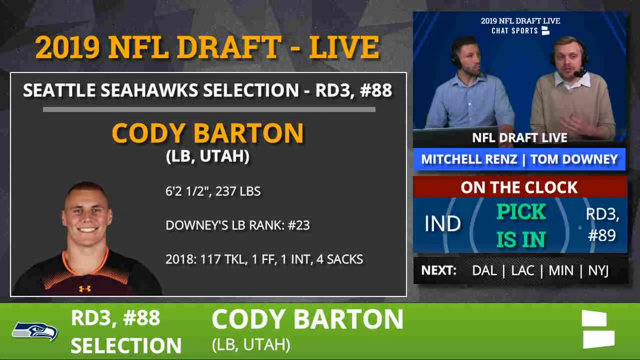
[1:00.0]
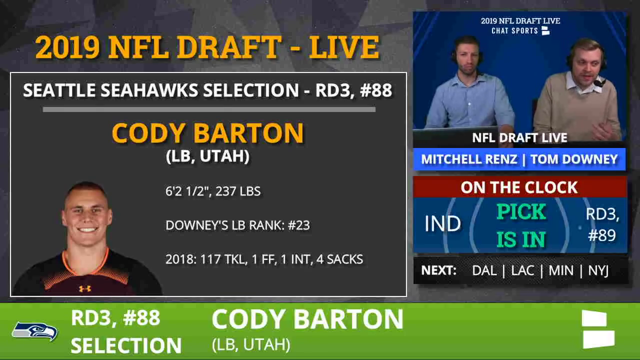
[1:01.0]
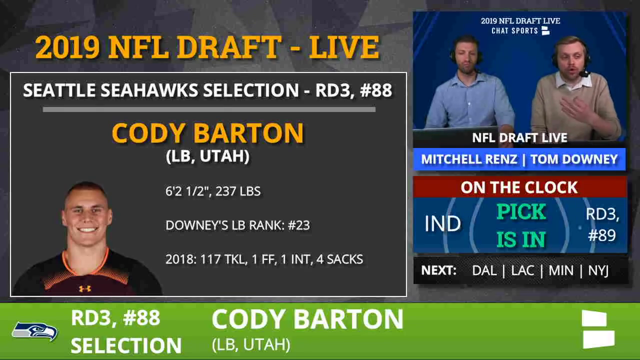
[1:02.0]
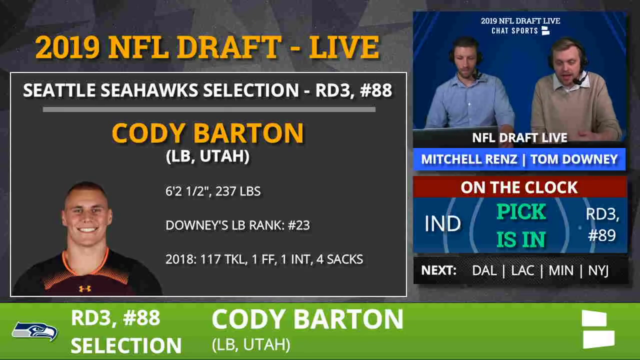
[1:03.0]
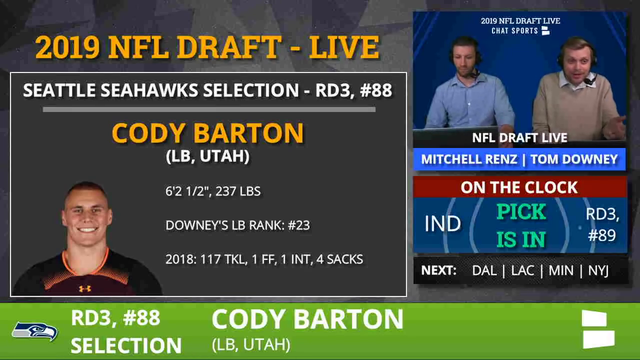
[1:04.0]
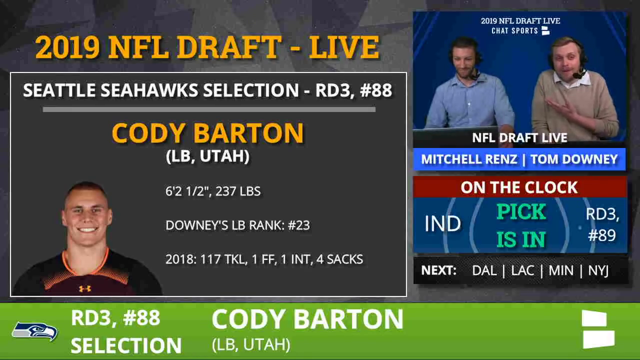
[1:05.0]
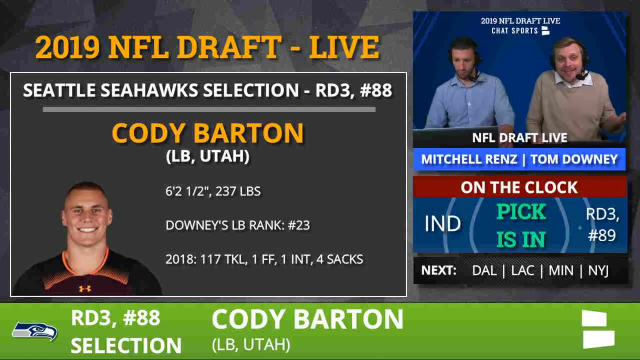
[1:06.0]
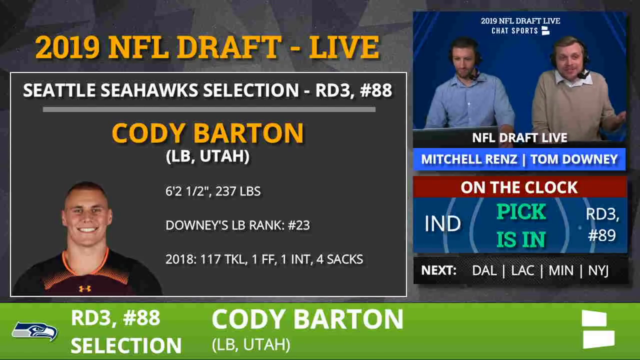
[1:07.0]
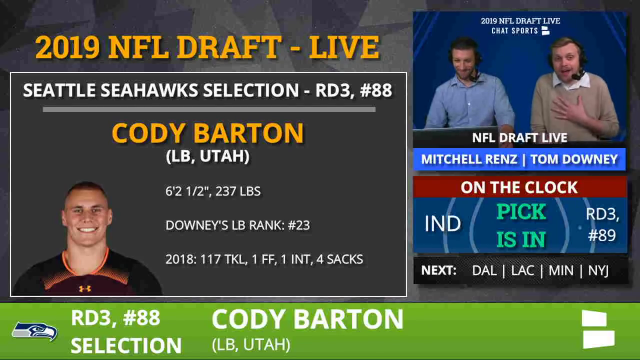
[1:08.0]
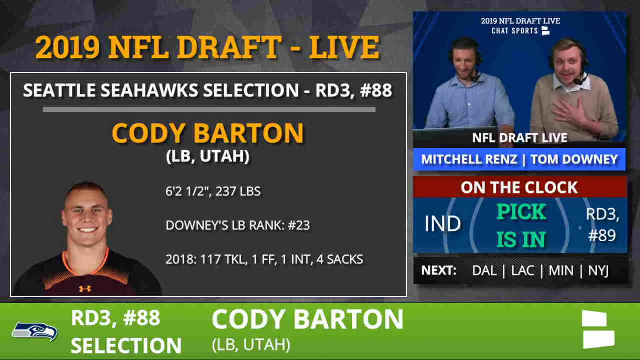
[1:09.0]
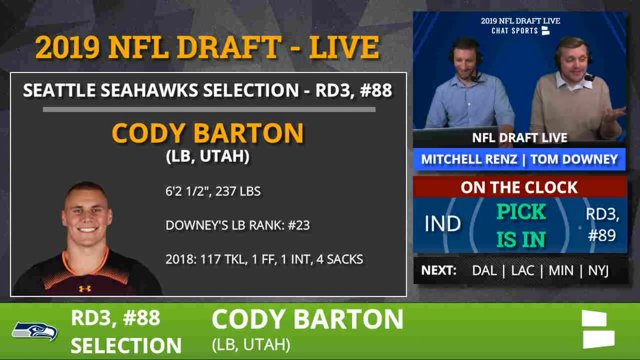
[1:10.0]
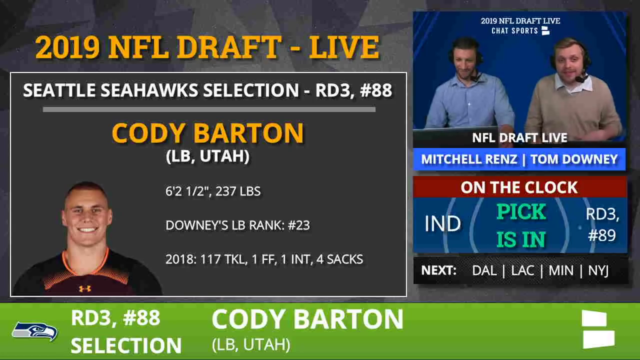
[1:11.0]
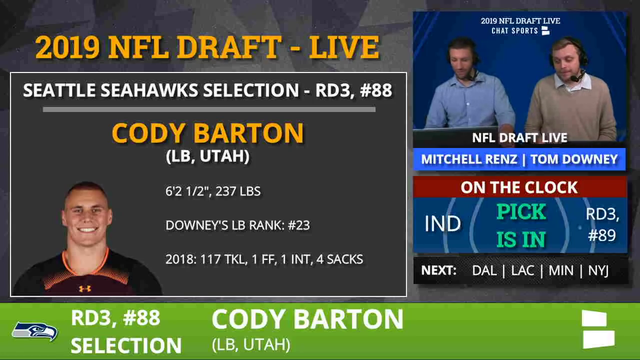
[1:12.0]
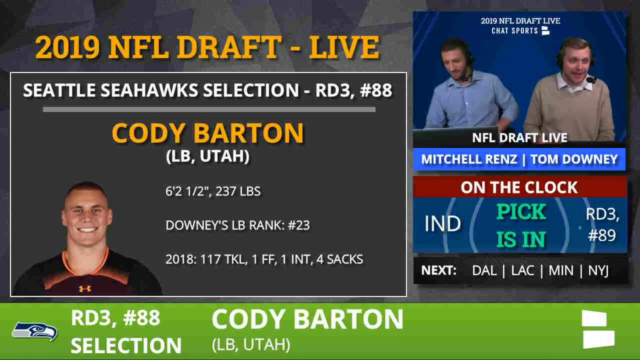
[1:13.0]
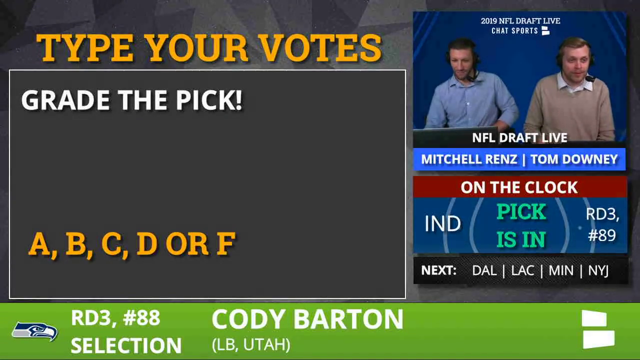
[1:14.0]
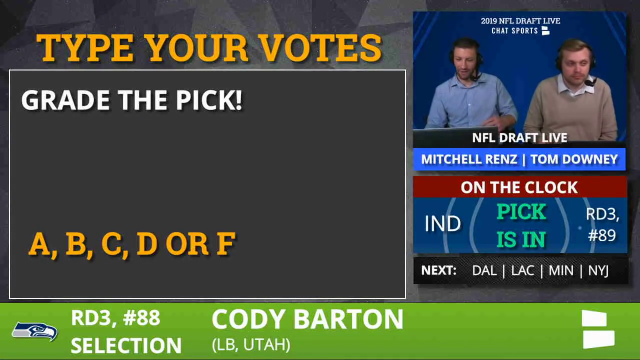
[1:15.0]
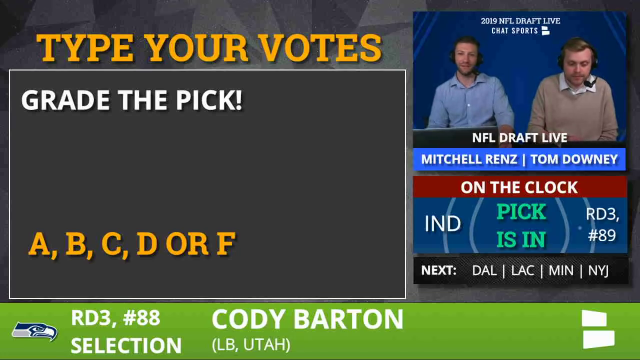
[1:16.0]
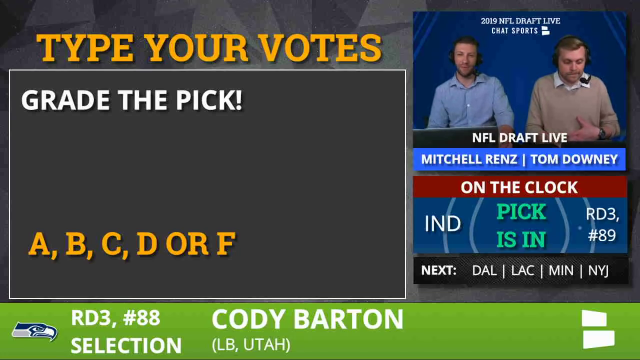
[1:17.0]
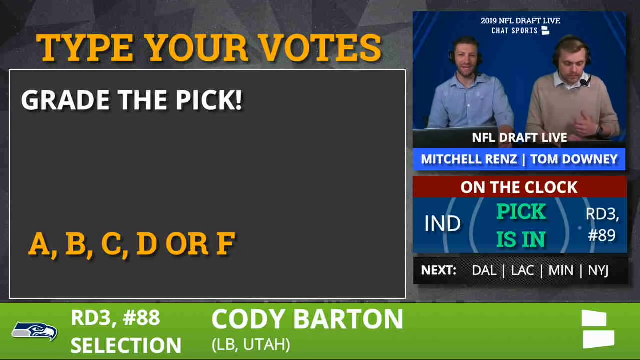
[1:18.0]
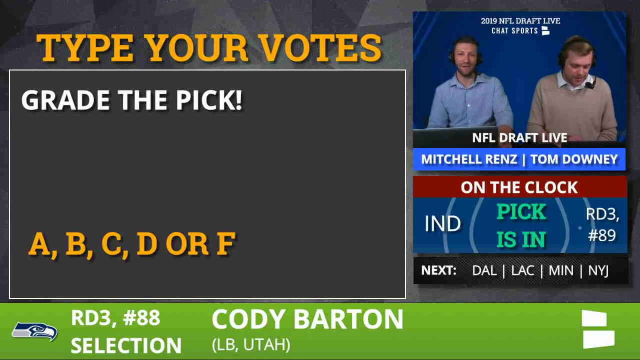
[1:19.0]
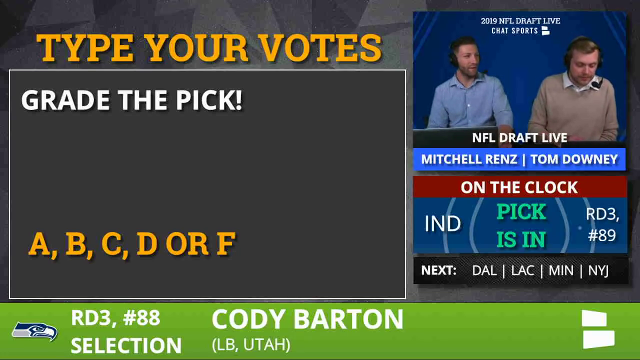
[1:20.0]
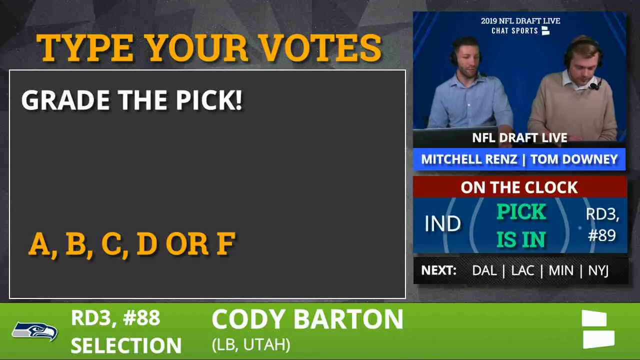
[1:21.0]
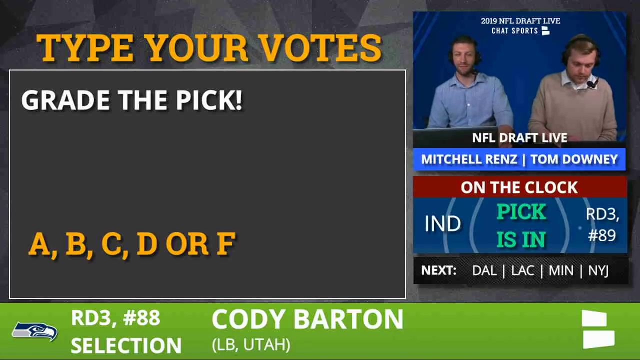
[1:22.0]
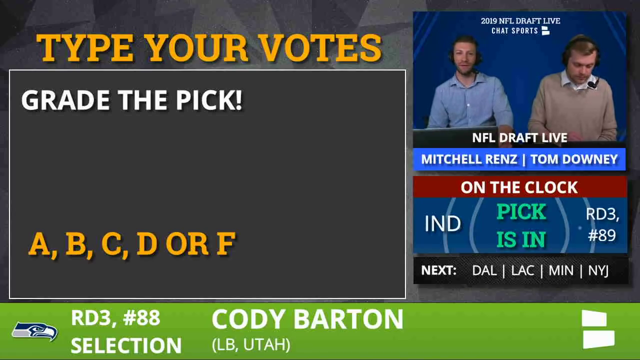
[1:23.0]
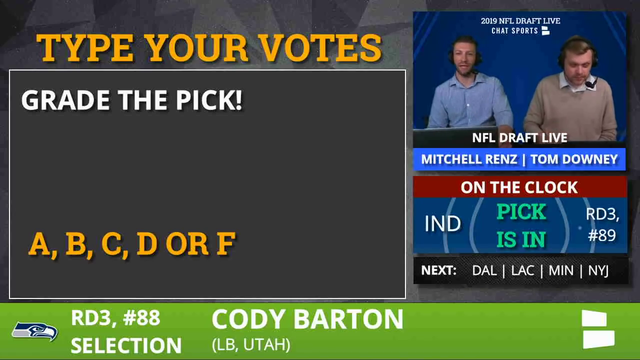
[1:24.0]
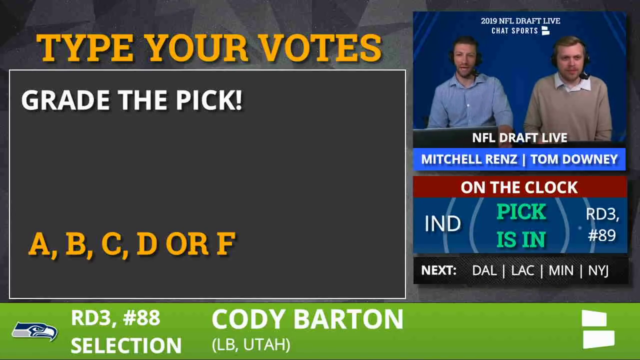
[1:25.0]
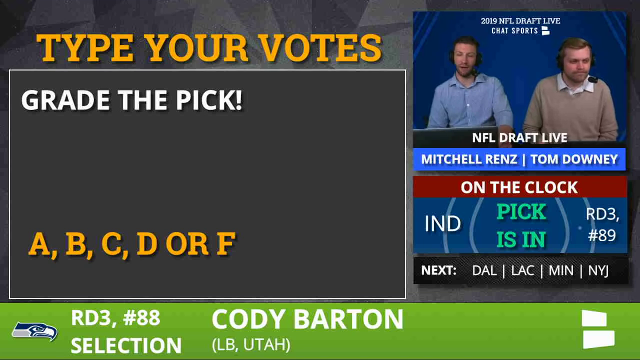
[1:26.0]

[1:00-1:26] The image fills the left half of the screen, and on the right are two presenters talking. The one who sits on the left wears a blue shirt unbuttoned at the collar; his colleague on the right wears a taupe sweater with a white shirt collar visible underneath. The presenter in the blue shirt holds his hands straight in front of him, moving out of frame, looks downwards and tilts his head slightly; the top of what looks like a laptop is visible in front of him, and his eyeline appears to be on its screen. The presenter on the right uses his left hand frequently as he talks, moving it onto his chest with the palm flat and fingers spread, then off his chest and downwards again. He leans forward to his left. His colleague then looks up directly at the camera, talking, while the person on the right looks downwards as he talks. On the left, the image of Cody Barton disappears and new text appears: at the top, capitalized yellow text says "type your votes"; in the box, white text reads "grade at the pick!"; and yellow text toward the bottom of the box reads "A, B, C, D or F", perhaps for viewers to vote. The presenter on the right quickly moves his right hand up to touch his nose and then lowers it again.